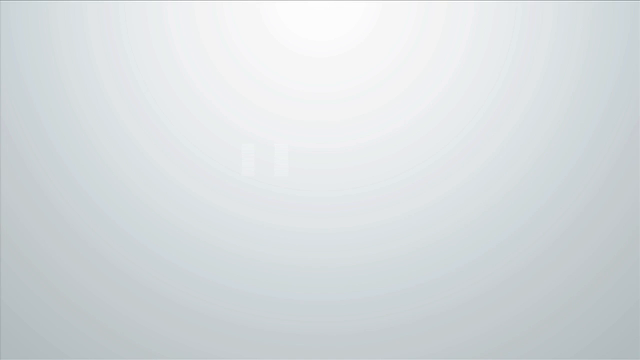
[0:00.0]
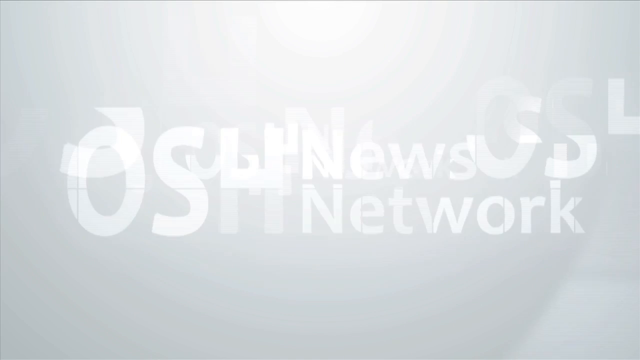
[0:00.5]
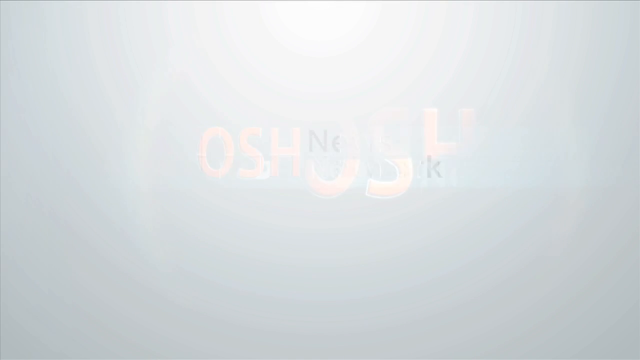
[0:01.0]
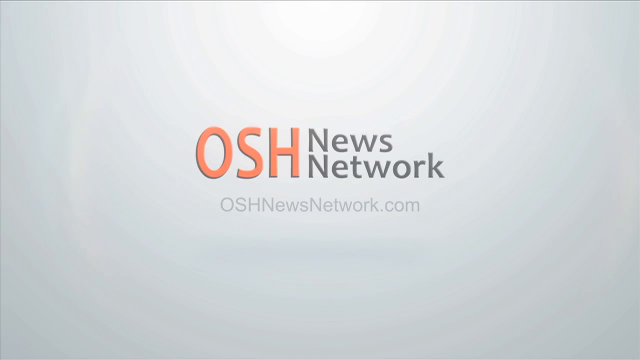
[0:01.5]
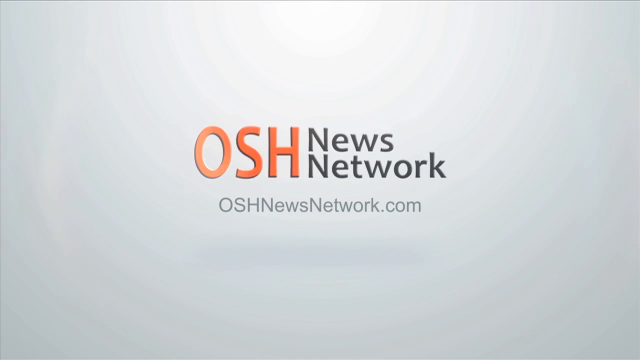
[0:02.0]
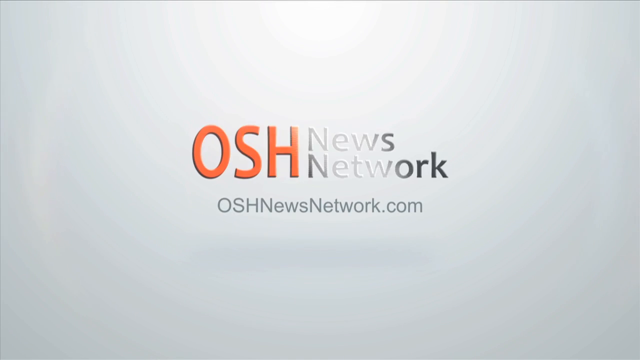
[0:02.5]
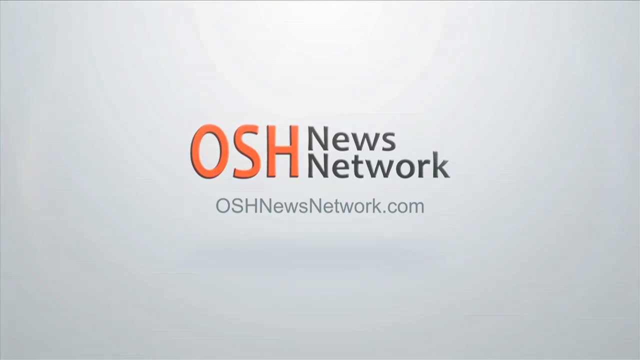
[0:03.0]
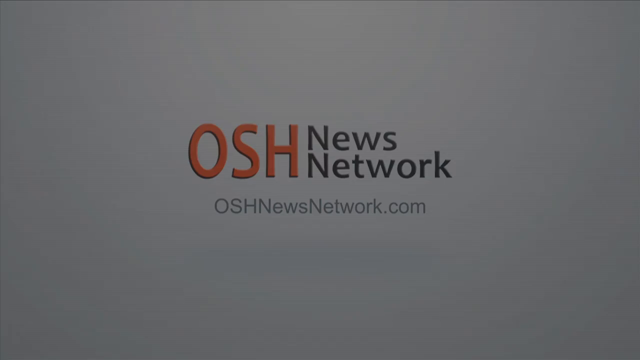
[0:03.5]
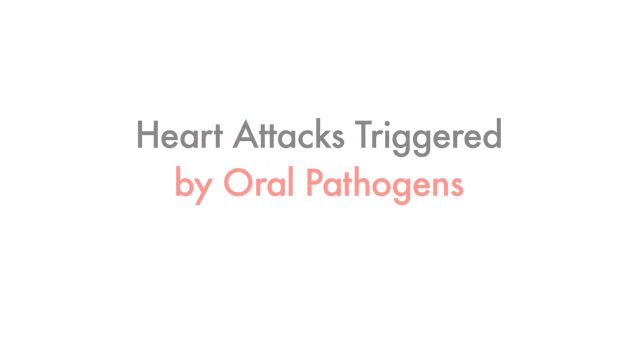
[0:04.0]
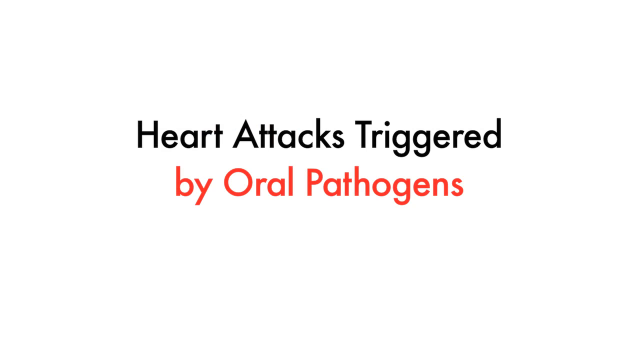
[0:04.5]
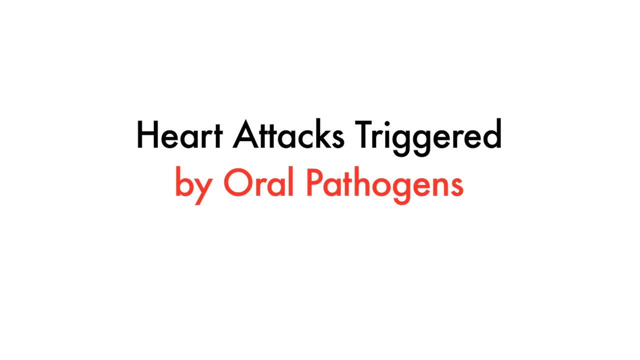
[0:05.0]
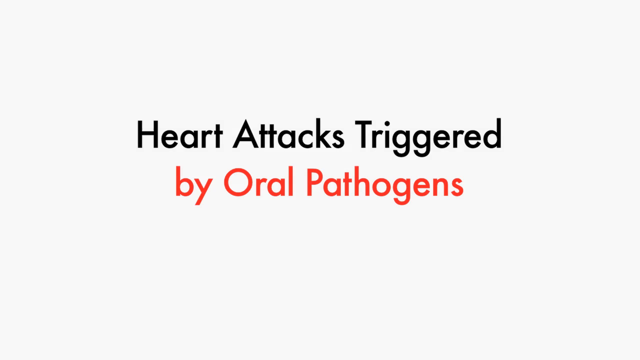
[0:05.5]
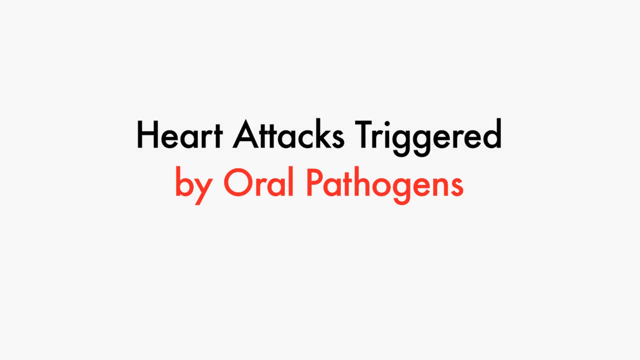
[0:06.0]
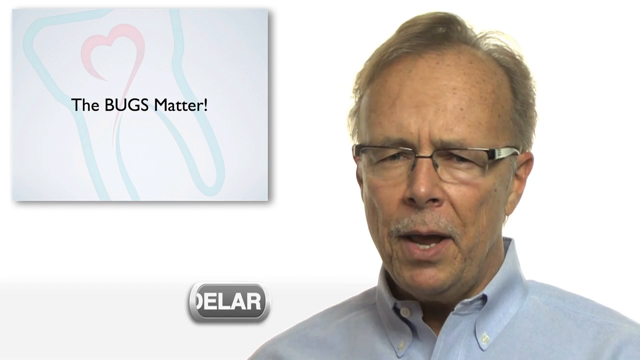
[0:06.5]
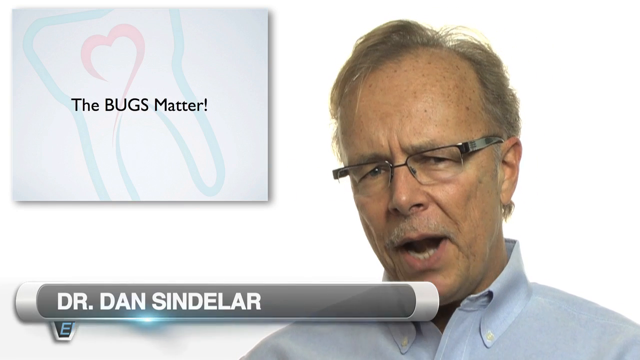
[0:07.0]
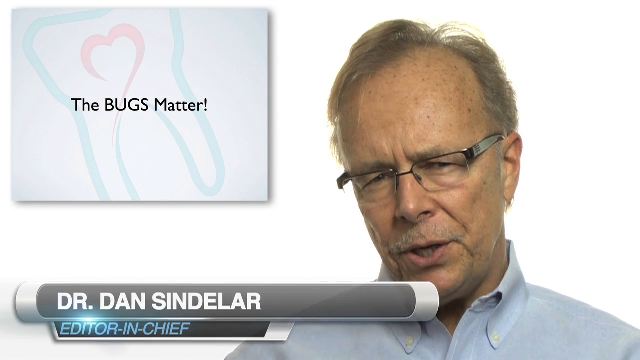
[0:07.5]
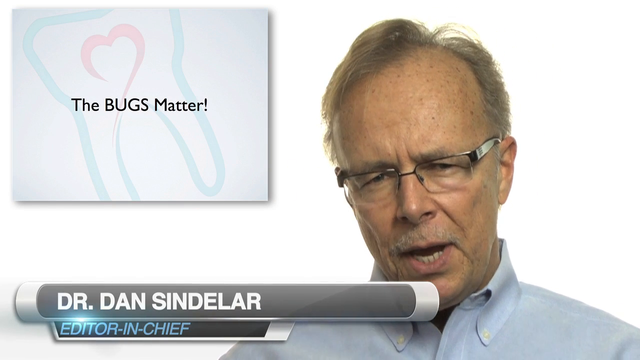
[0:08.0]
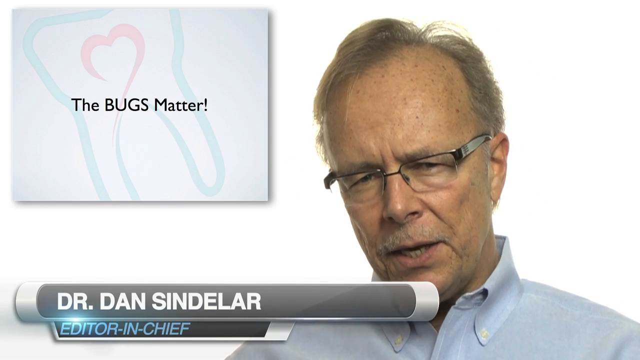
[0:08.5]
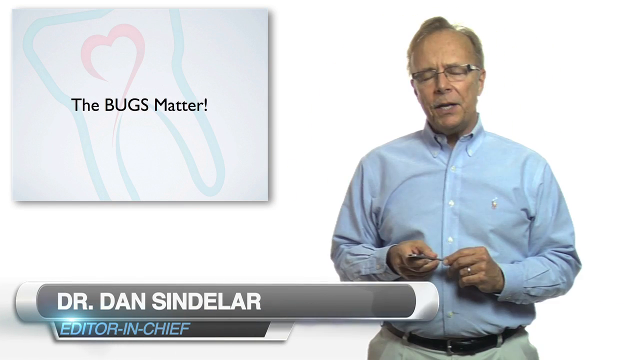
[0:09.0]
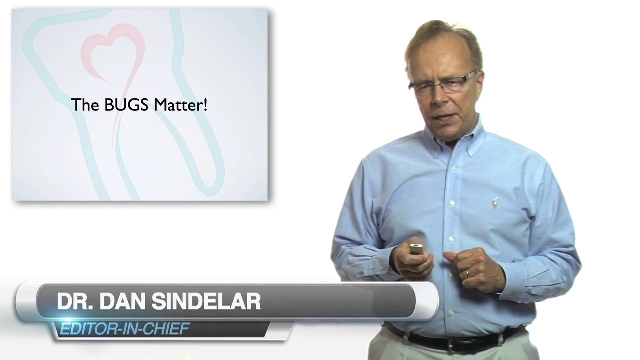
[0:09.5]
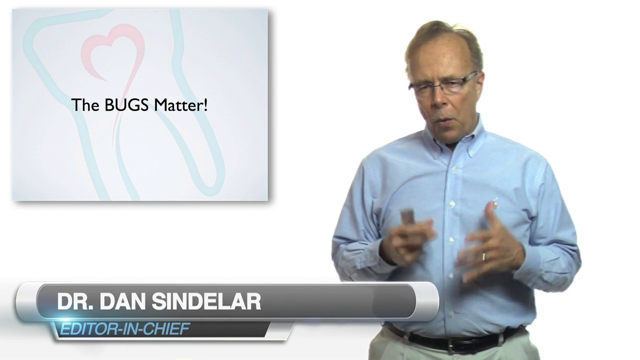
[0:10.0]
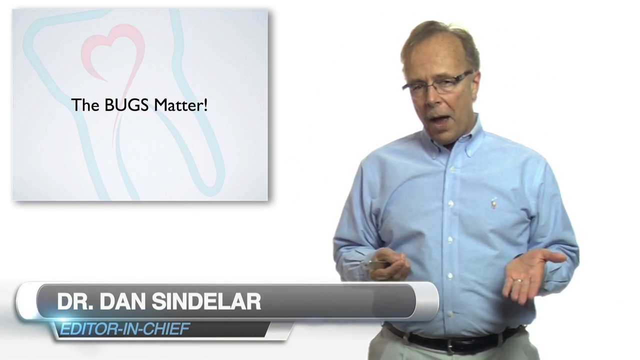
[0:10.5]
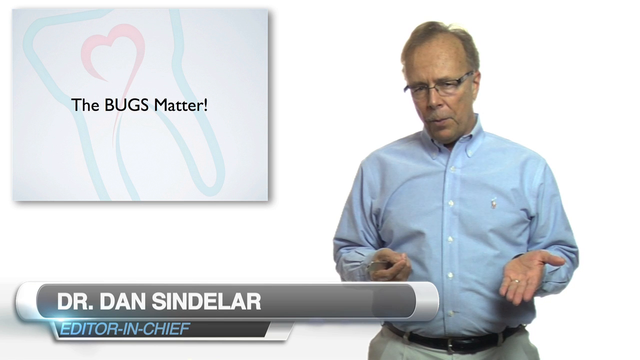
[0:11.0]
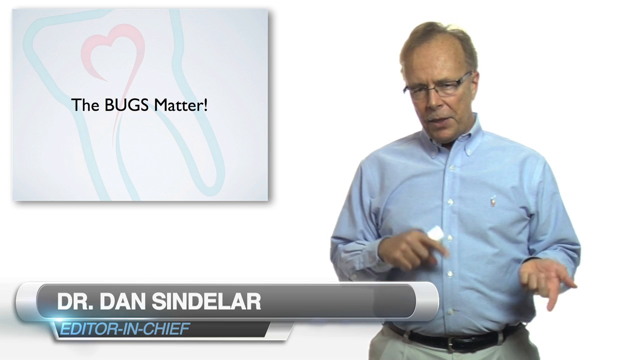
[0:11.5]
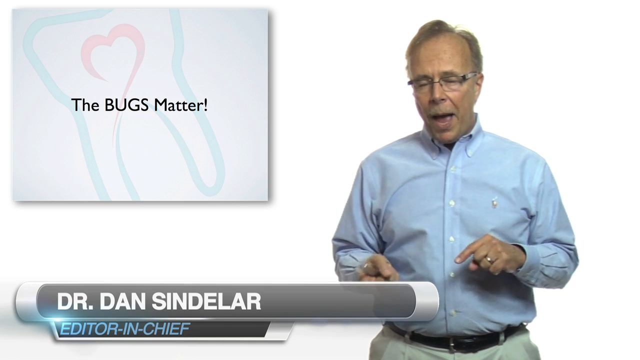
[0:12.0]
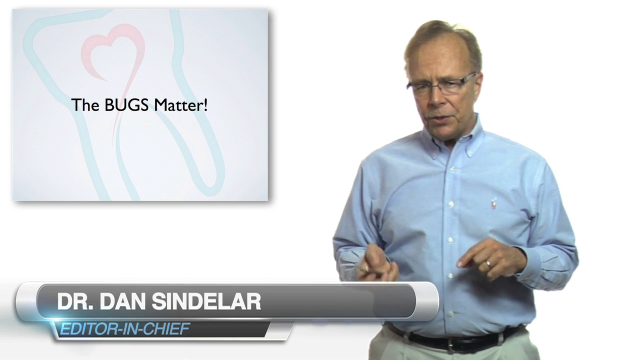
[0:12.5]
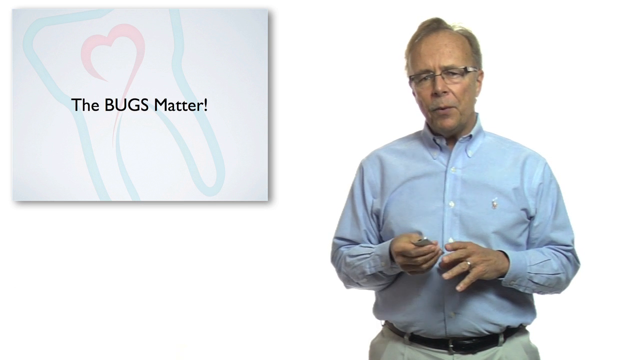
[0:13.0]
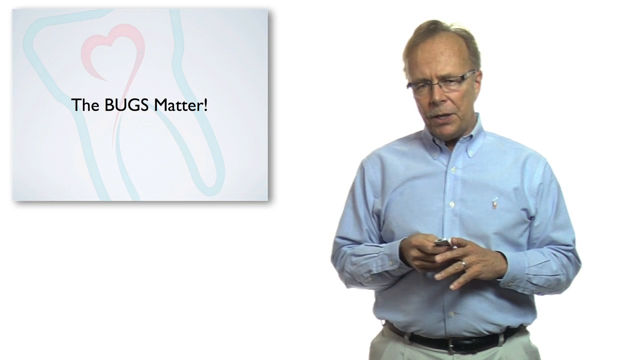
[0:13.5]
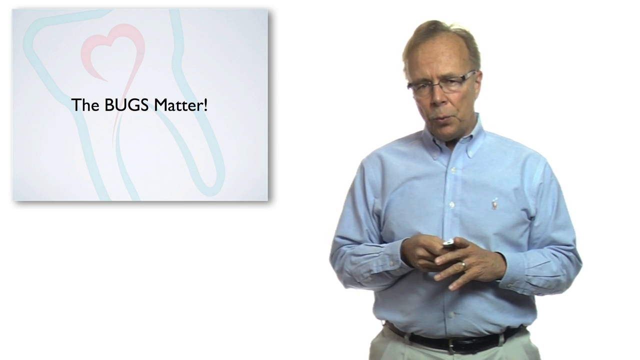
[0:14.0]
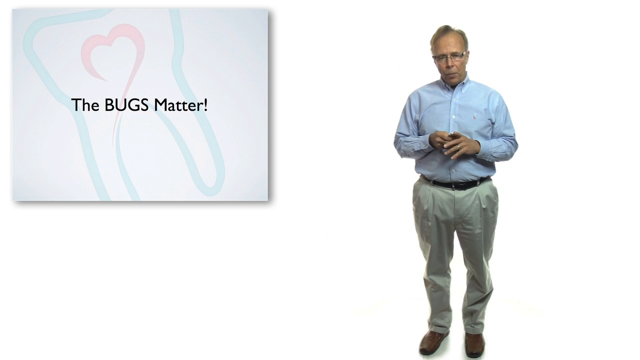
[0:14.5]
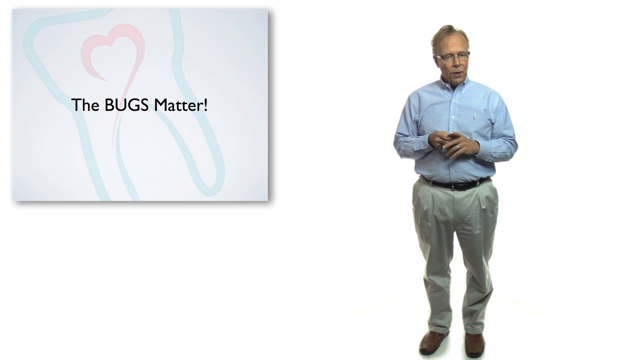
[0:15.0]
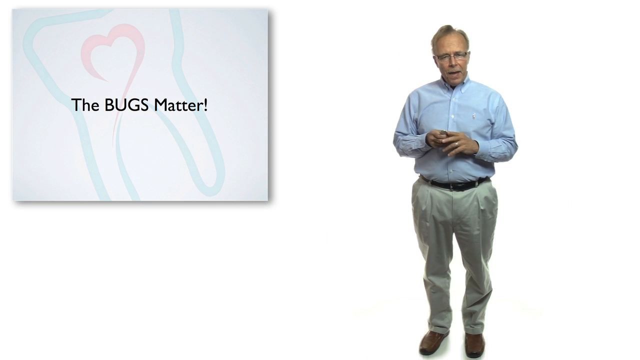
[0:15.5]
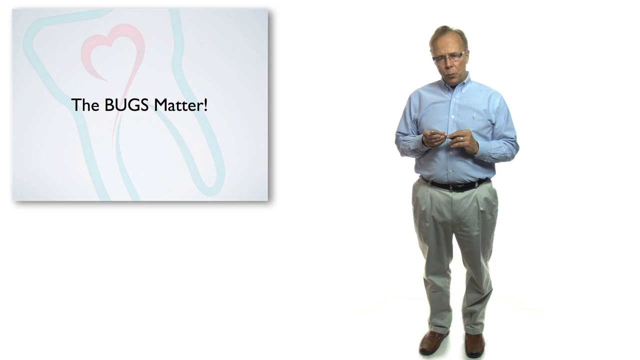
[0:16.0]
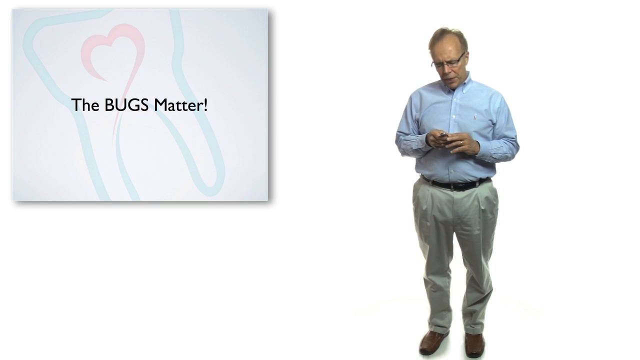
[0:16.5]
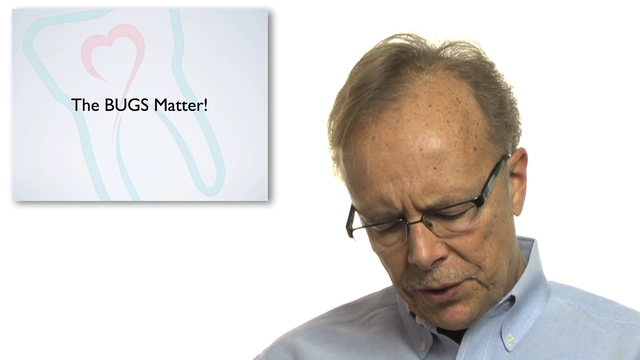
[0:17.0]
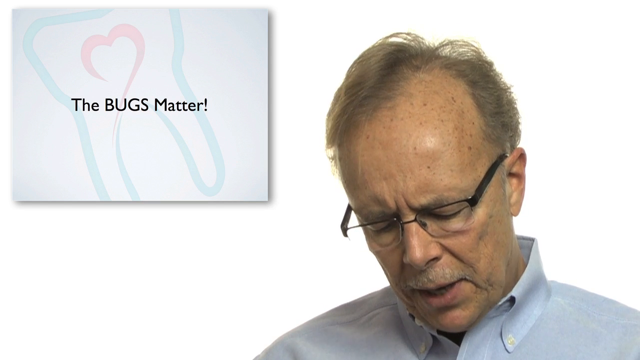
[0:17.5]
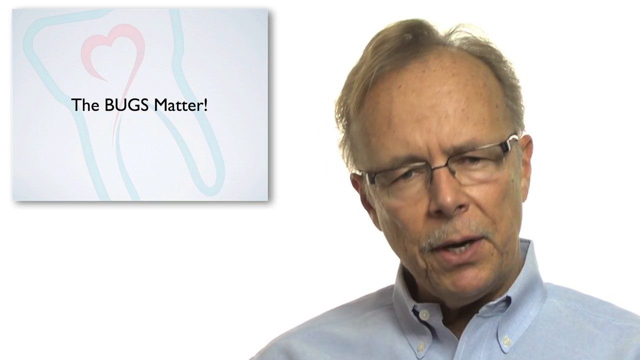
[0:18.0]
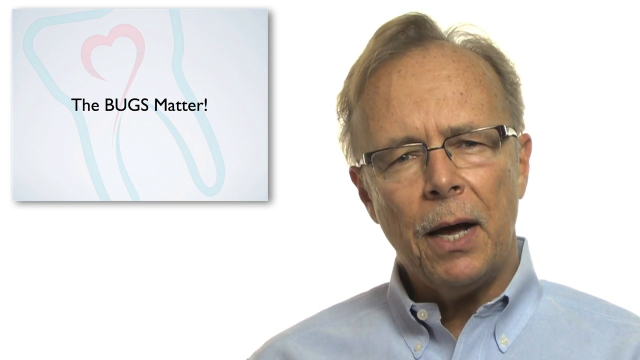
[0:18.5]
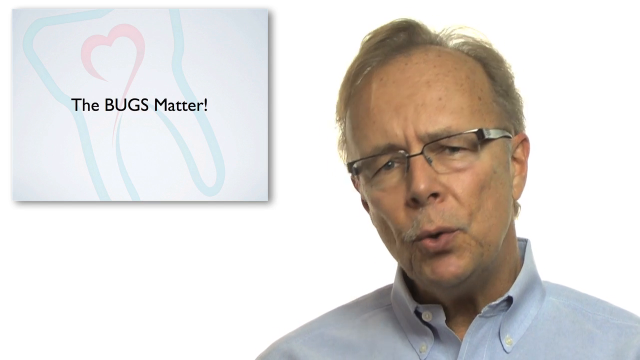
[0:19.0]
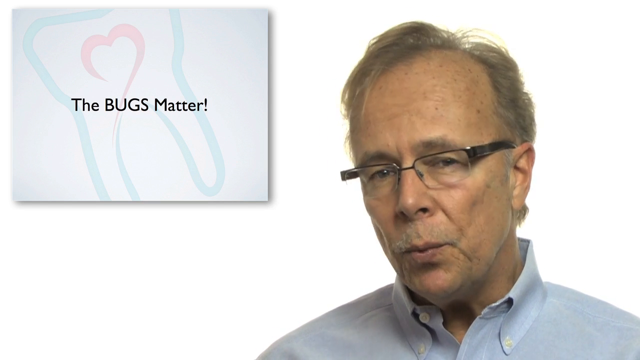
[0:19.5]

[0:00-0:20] The video opens on the title "OSH News Network," with "OSH" in red and "News Network" in black, like a dark gray. Under it, "oshnewsnetwork.com" appears in gray. The background is a light grey. A slide with a white background reads "heart attacks triggered by oral pathogens," all in black except "pathogens," which is in red. A man, Dr. Dan Sindelar, the Editor In Chief, is talking. He wears a long-sleeved, light blue collared shirt, glasses, brown khaki pants with a black belt, and brown shoes, and he has short, thin brown hair. In the top left corner is "The BUGS Matter!", with BUGS apparently an acronym. The words are written over a tooth that has a heart in the middle of it.